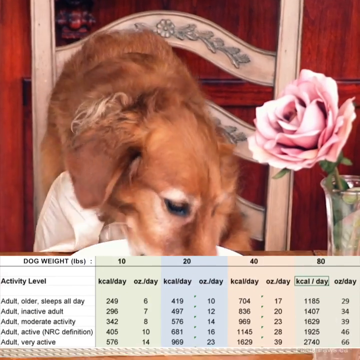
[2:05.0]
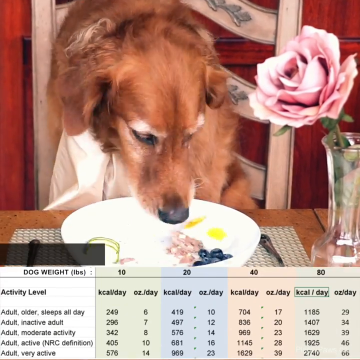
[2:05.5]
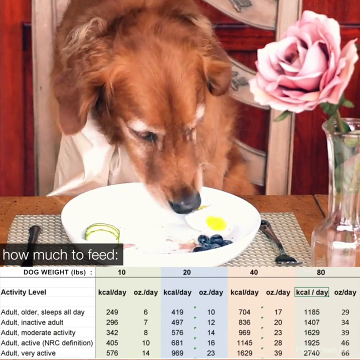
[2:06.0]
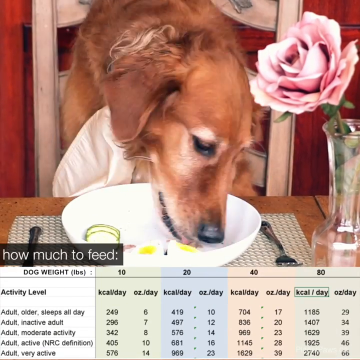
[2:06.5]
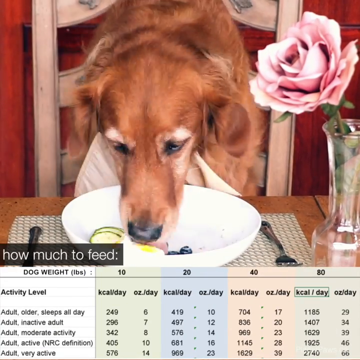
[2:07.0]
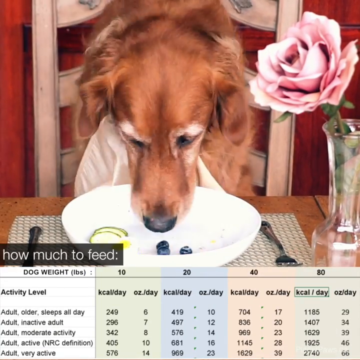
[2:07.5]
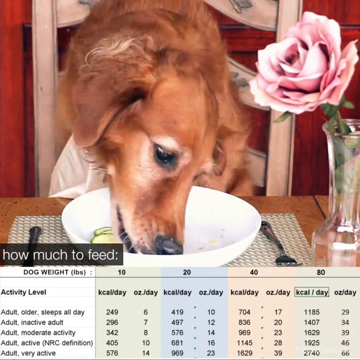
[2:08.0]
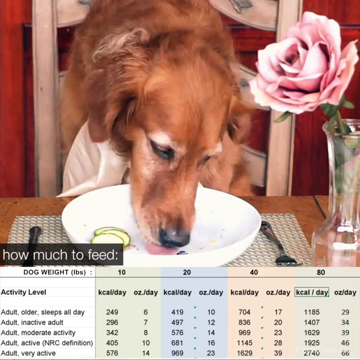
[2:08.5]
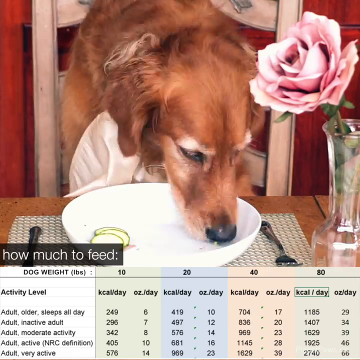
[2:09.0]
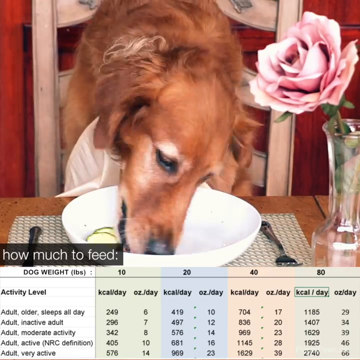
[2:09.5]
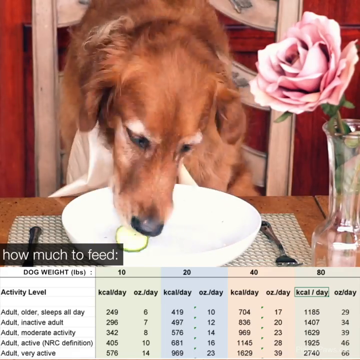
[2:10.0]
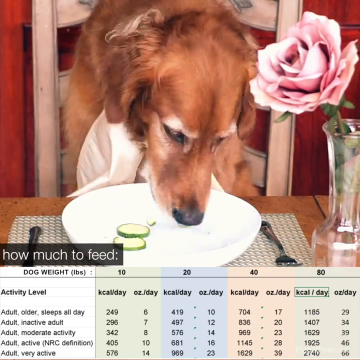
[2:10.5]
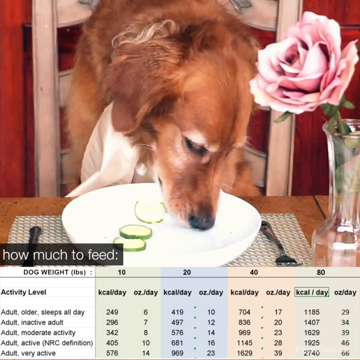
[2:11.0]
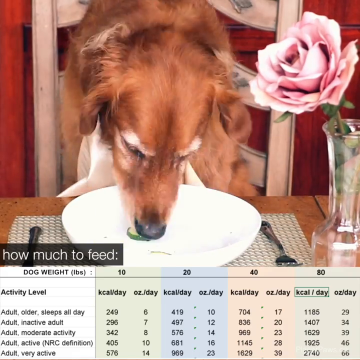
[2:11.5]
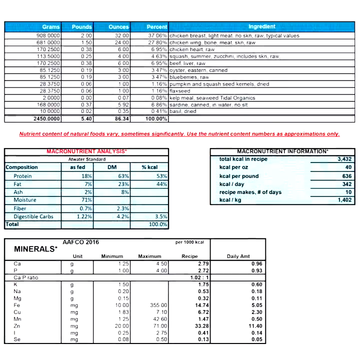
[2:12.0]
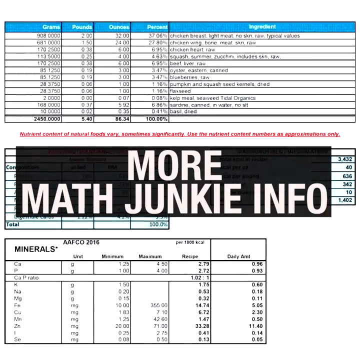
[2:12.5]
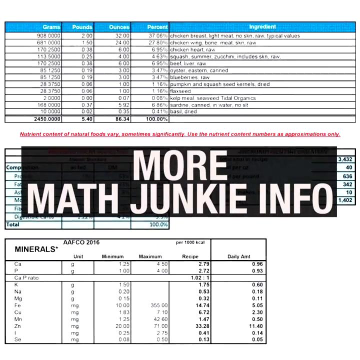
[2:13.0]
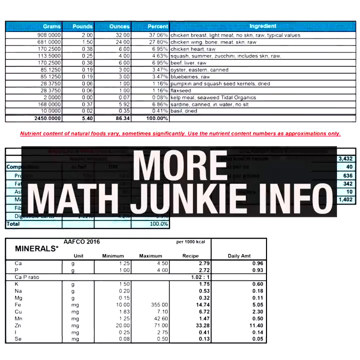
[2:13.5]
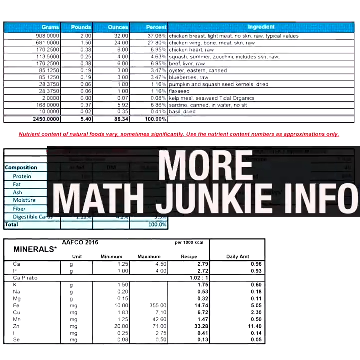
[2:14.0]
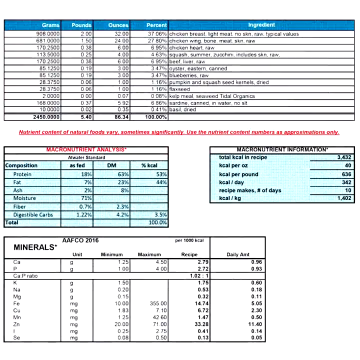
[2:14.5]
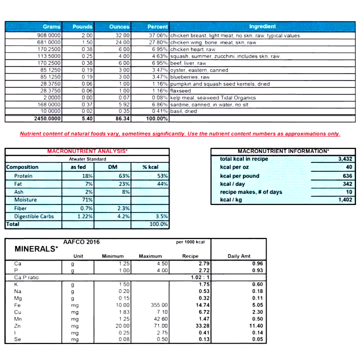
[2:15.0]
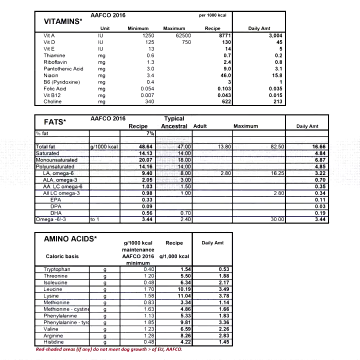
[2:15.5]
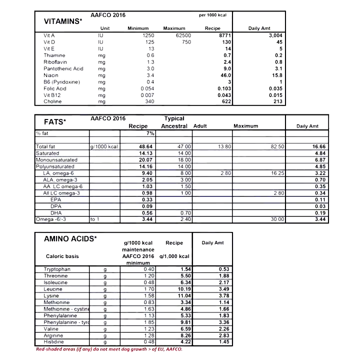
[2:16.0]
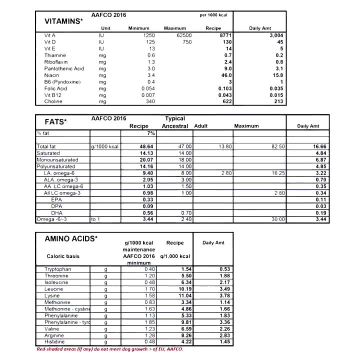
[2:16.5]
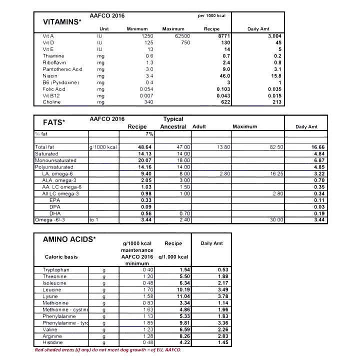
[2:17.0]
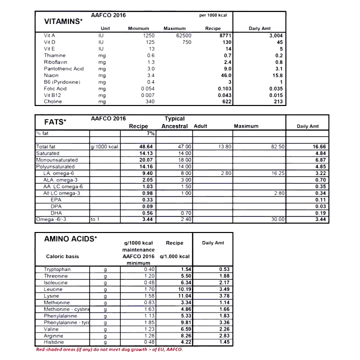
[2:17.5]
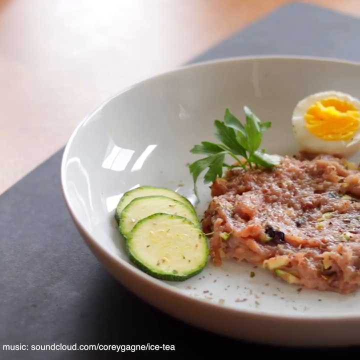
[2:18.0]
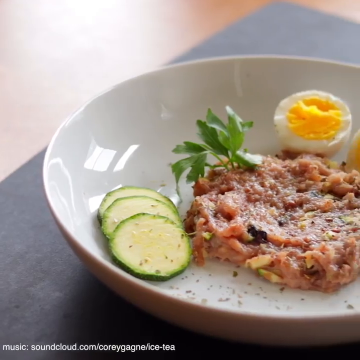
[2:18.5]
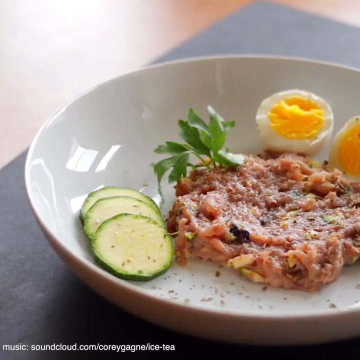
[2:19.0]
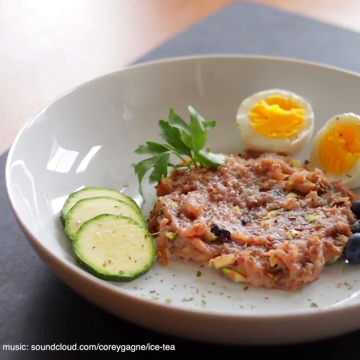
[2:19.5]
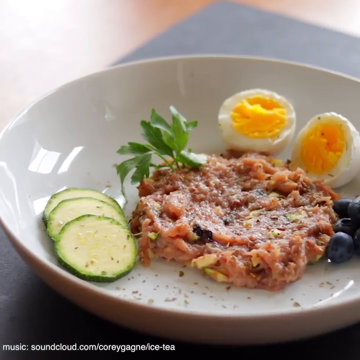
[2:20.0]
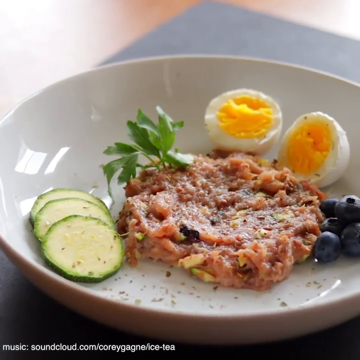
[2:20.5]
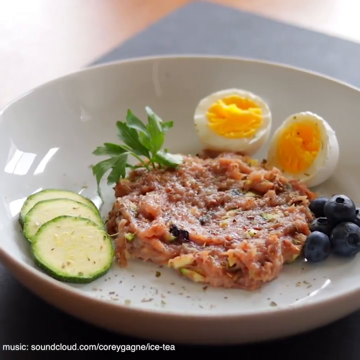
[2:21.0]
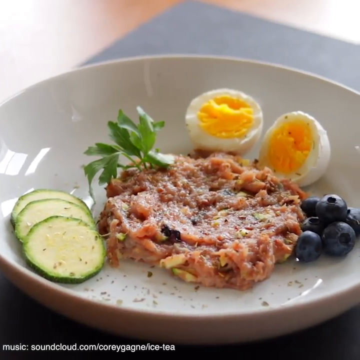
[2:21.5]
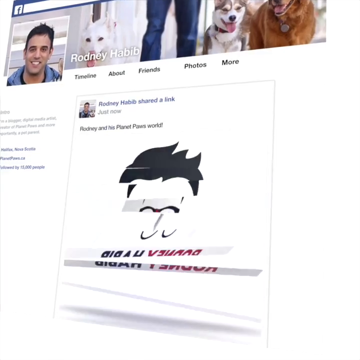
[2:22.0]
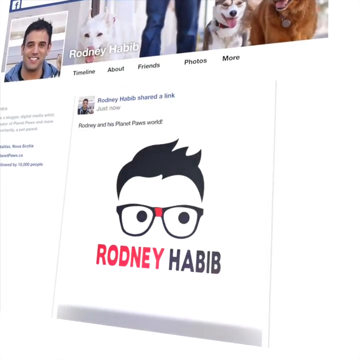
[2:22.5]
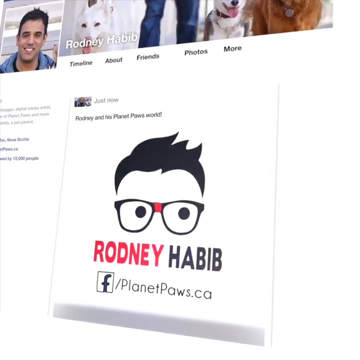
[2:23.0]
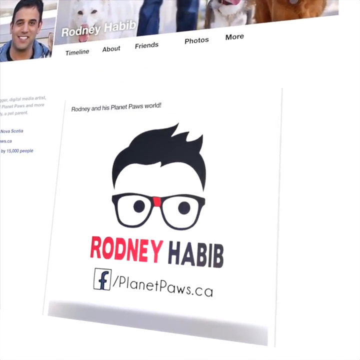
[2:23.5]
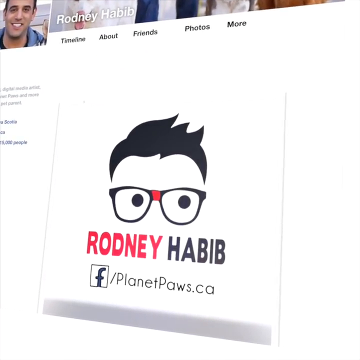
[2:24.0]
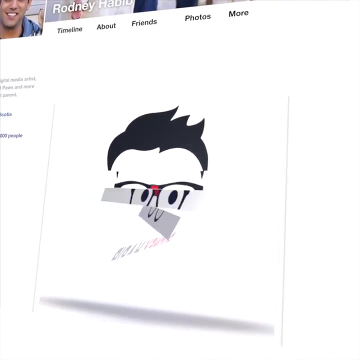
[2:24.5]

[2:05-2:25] A golden retriever eats the burgers from a plate with a hard-boiled egg, some blueberries and more slices of zucchini. The food does not appear to have been cooked, except for the egg. More math junkie info follows, with the recipe's nutritional information: vitamins, fats, minerals, amino acids, and the activity level of the dogs being fed.